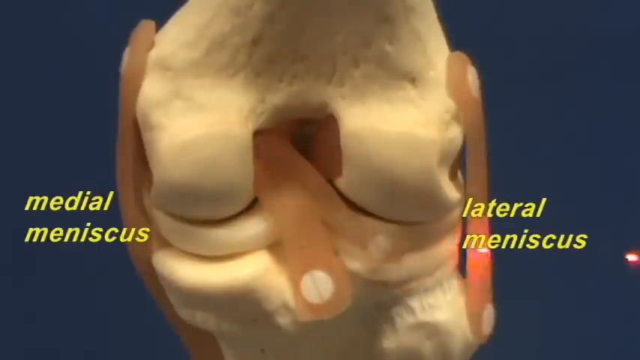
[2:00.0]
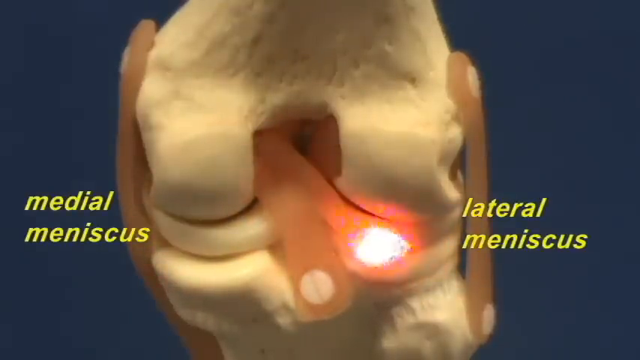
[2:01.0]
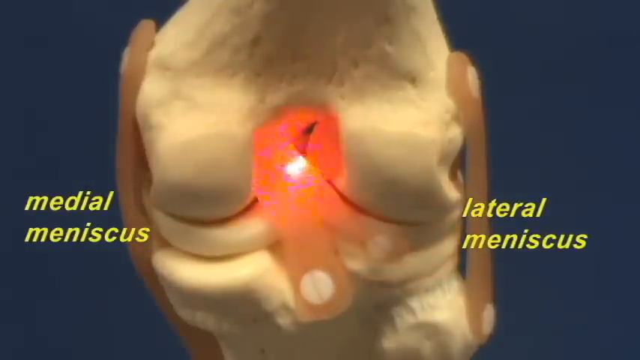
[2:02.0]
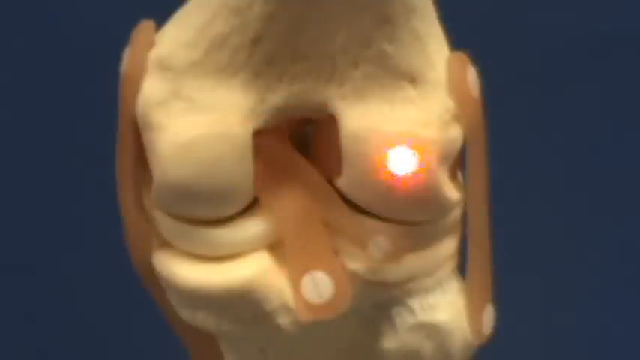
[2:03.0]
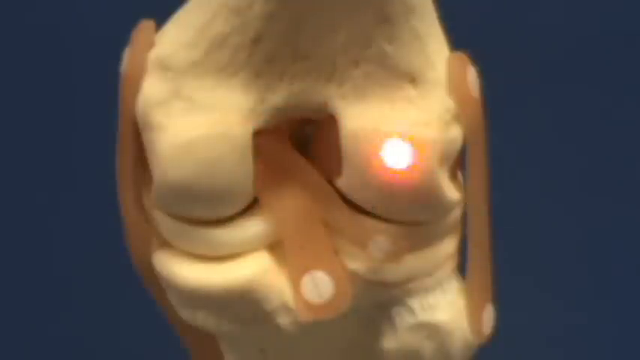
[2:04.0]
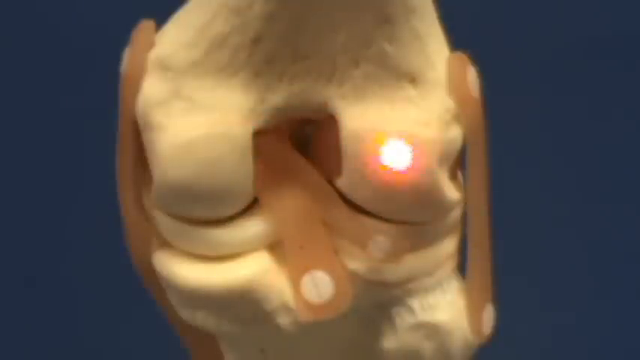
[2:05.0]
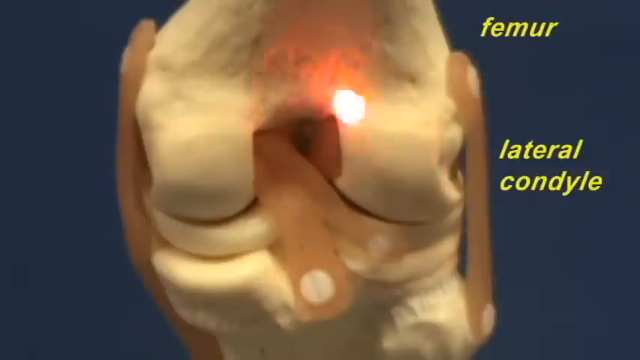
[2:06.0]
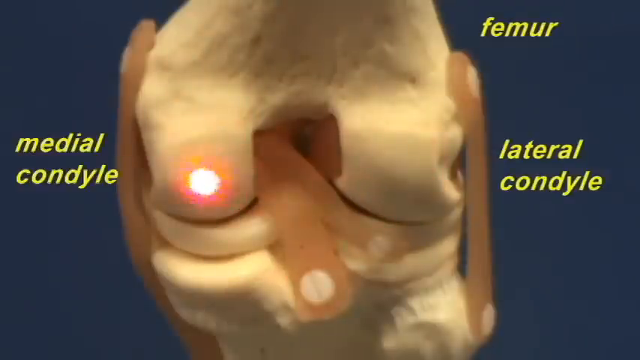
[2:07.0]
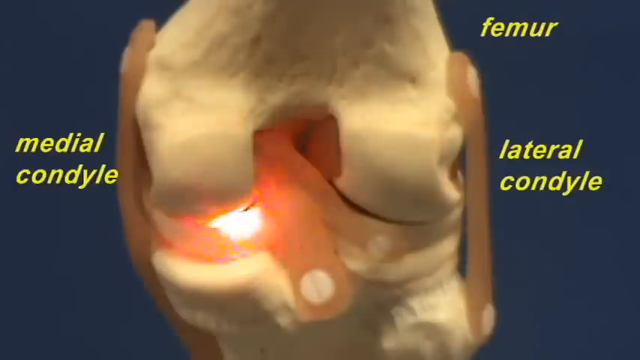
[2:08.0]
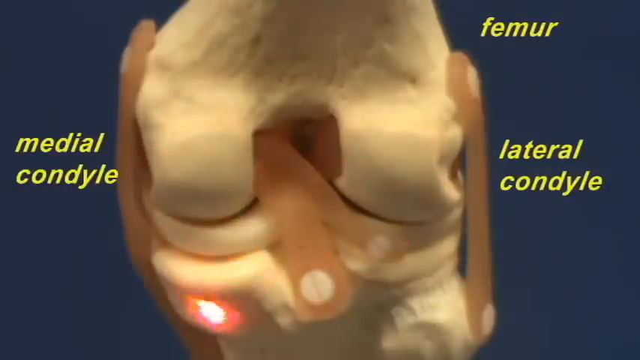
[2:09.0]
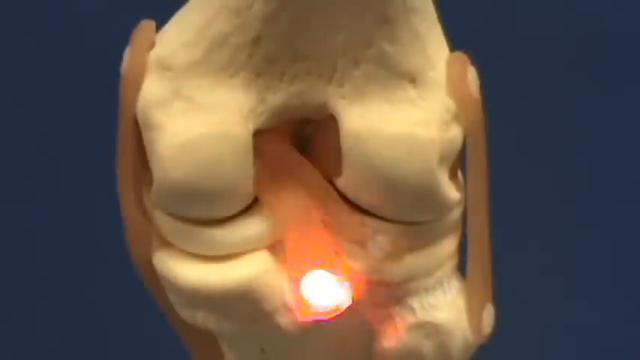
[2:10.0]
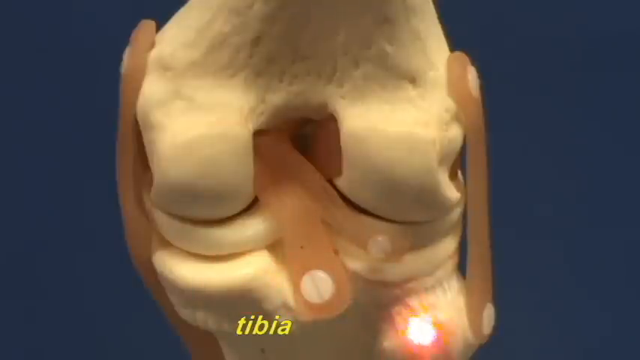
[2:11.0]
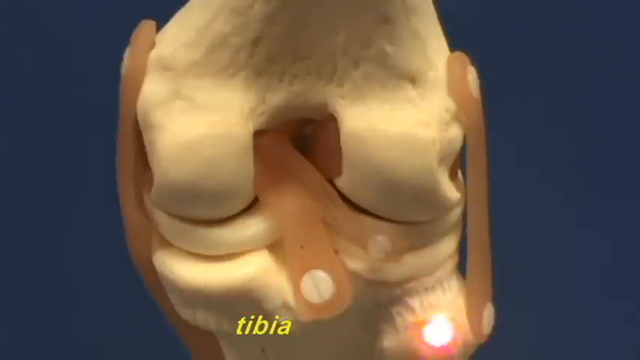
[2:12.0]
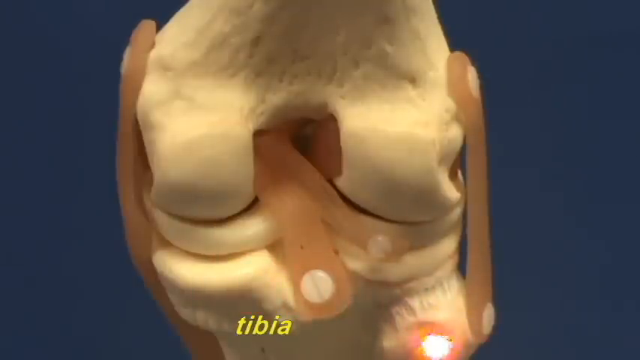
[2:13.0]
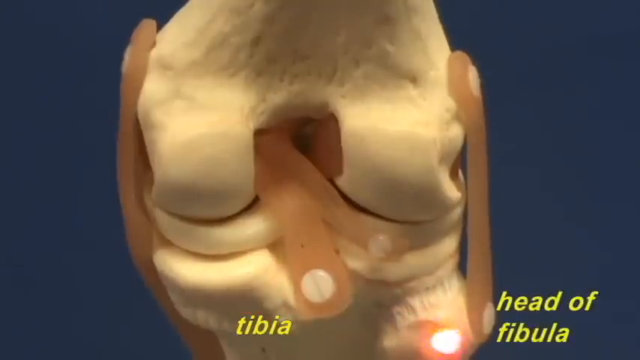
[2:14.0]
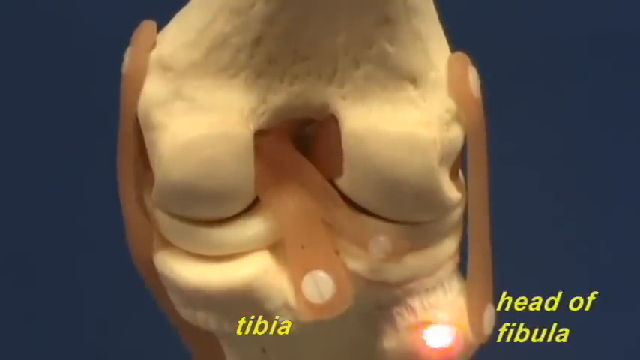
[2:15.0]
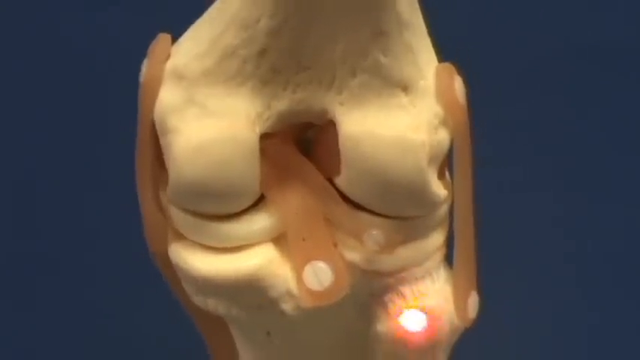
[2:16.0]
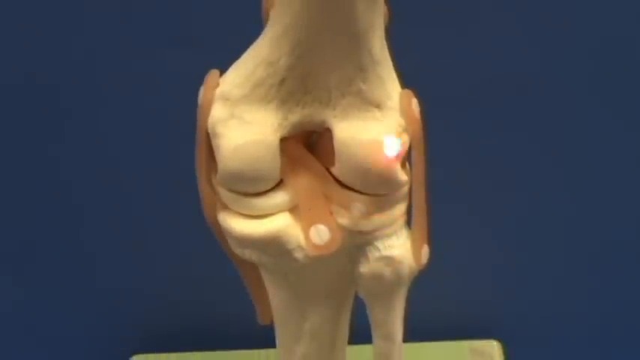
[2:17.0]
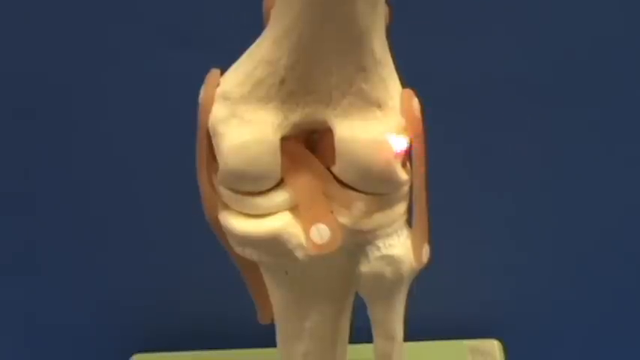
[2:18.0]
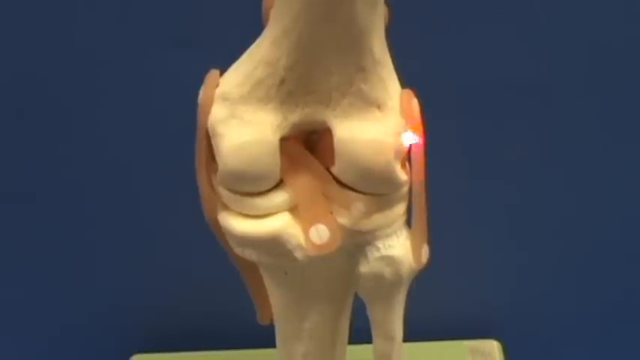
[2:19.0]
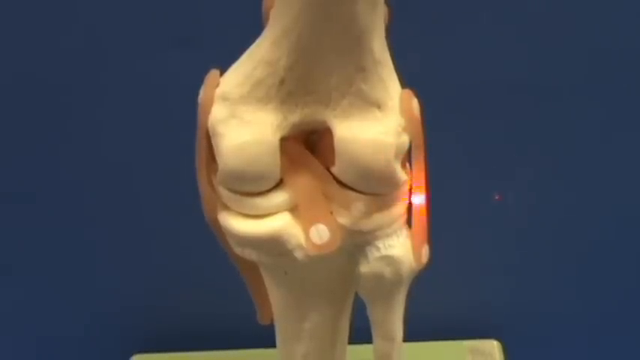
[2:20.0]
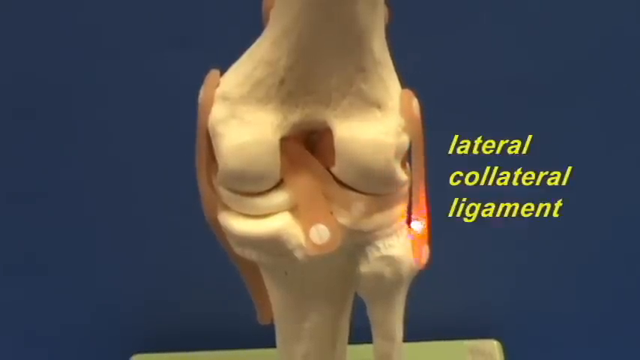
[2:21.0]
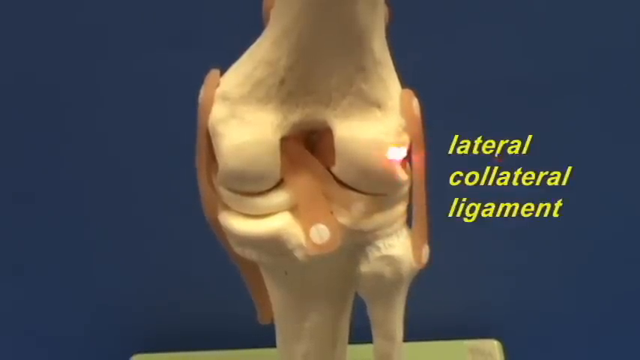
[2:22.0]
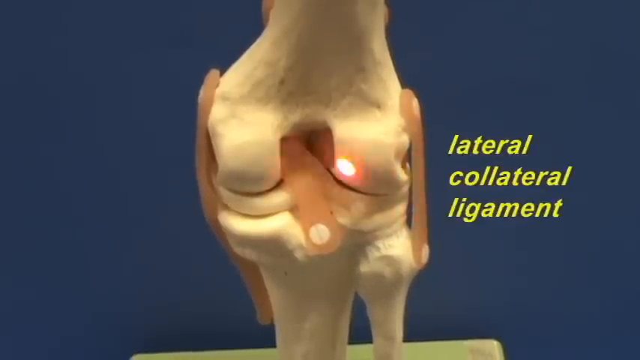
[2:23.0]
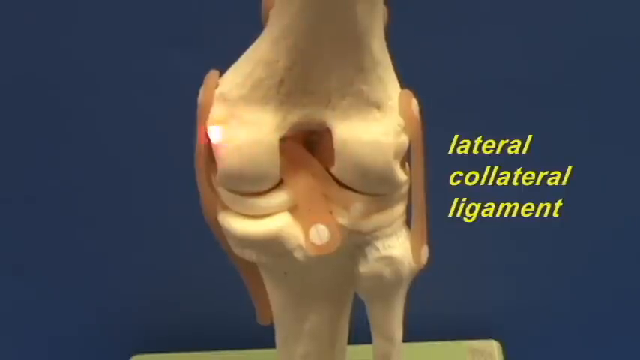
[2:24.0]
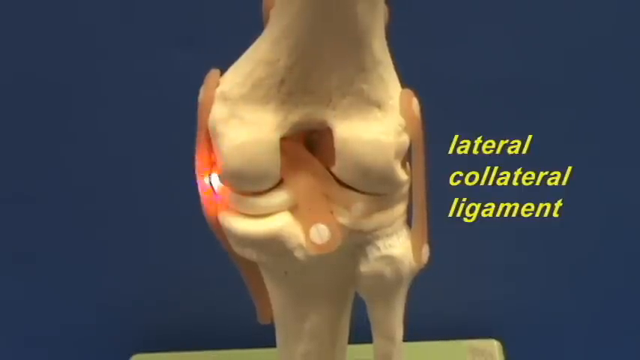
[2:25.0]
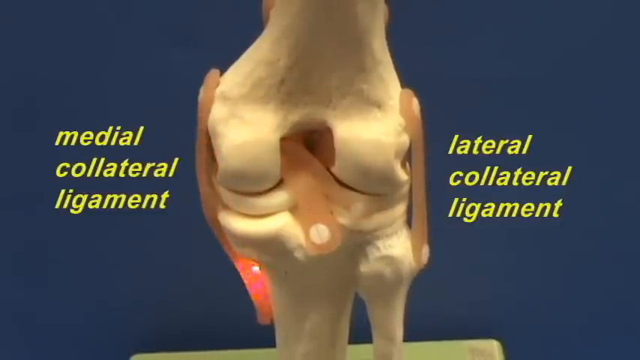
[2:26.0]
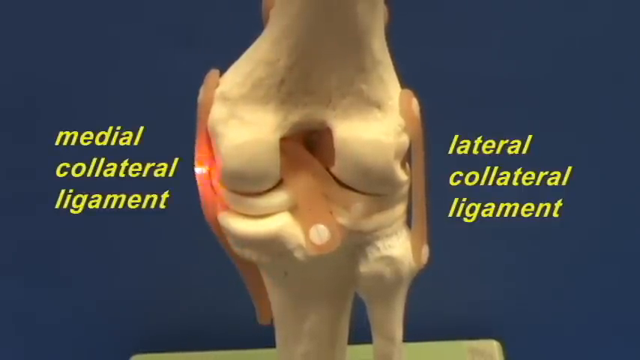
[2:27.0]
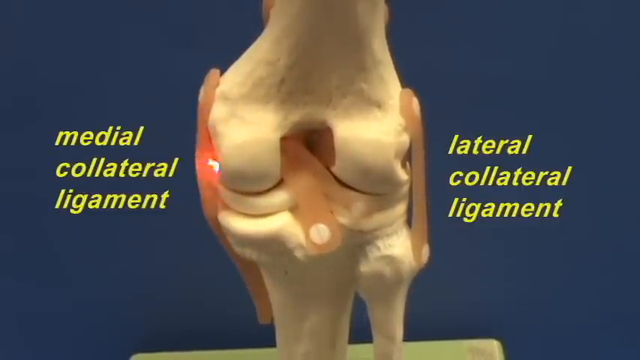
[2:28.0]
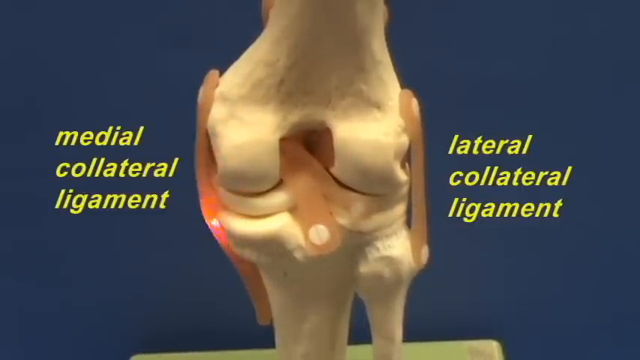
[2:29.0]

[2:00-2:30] All of the structures of the knee joint are back in place in the three-dimensional model. The doctor traces and points with his laser pointer at different areas, mainly the lateral meniscus and the medial meniscus, as well as the femur, whose bottom part is visible. The medial condyle and the lateral condyle are also visible. The doctor then swipes to open the view a bit more, showing more of the joint: the tibia and the head of the fibula are visible, along with the lateral collateral ligament, now on the other side, and the medial collateral ligament. All of them are traced and pointed at very thoroughly and slowly.